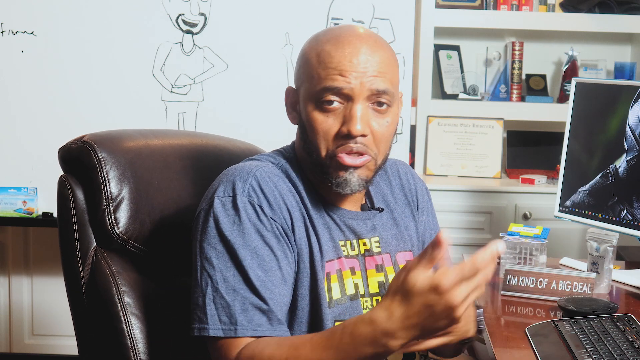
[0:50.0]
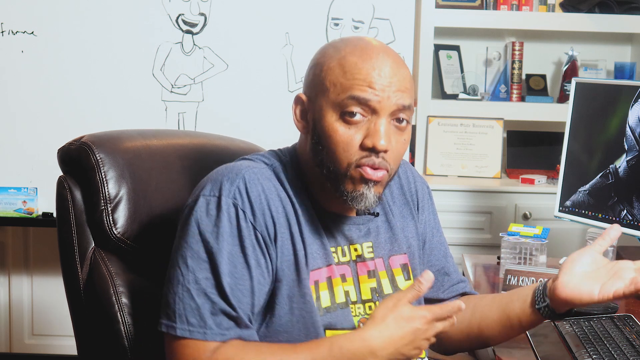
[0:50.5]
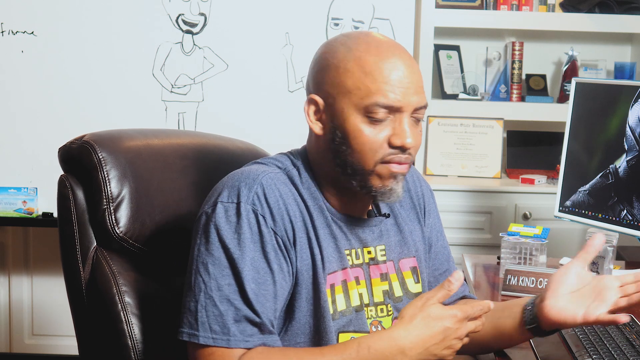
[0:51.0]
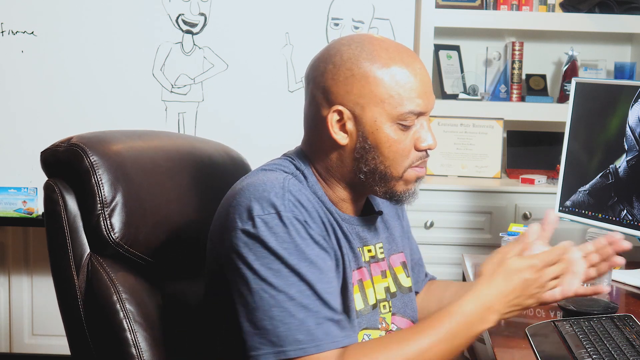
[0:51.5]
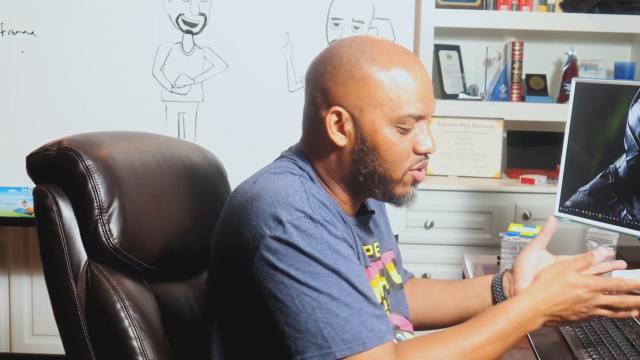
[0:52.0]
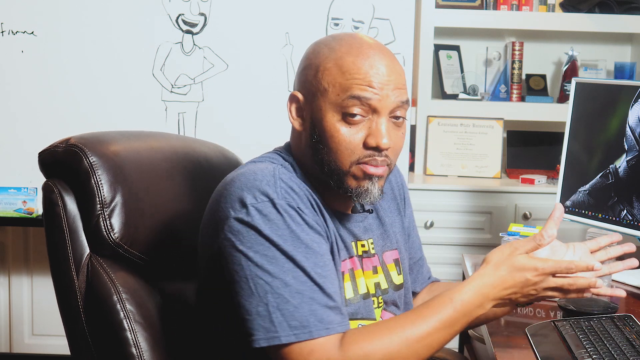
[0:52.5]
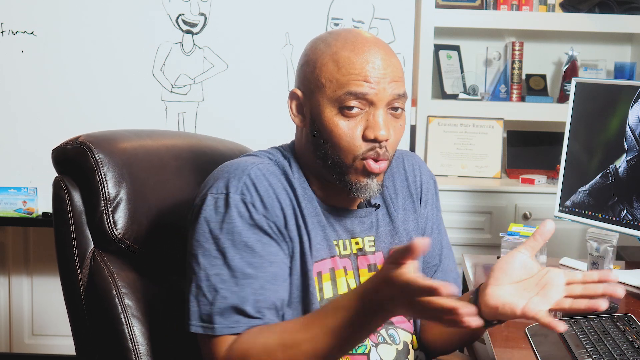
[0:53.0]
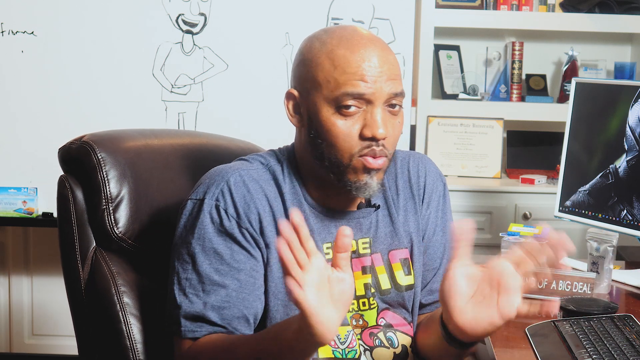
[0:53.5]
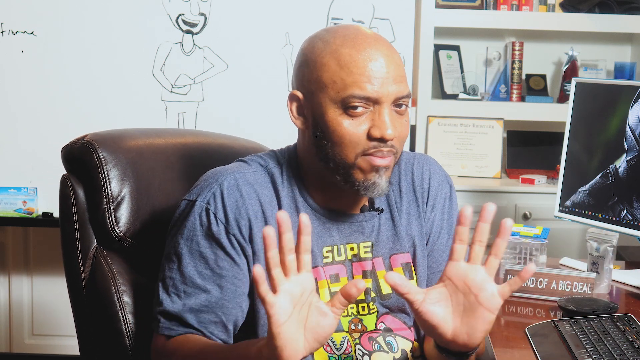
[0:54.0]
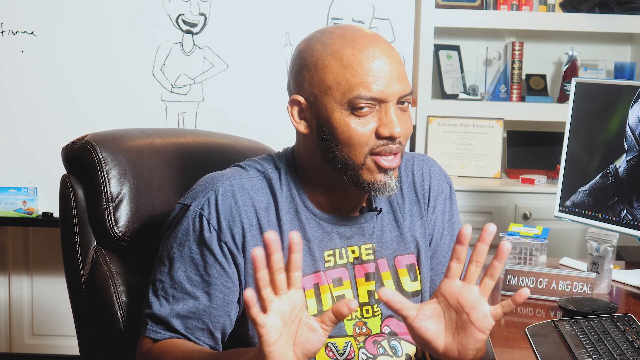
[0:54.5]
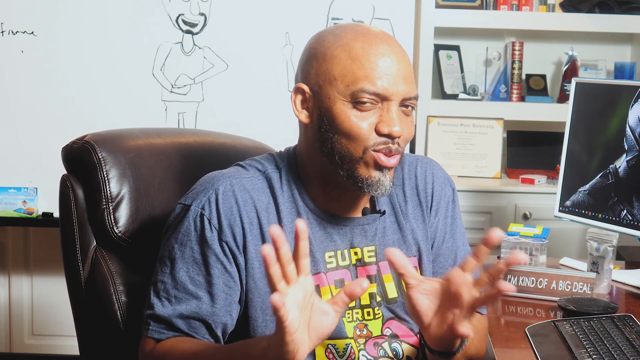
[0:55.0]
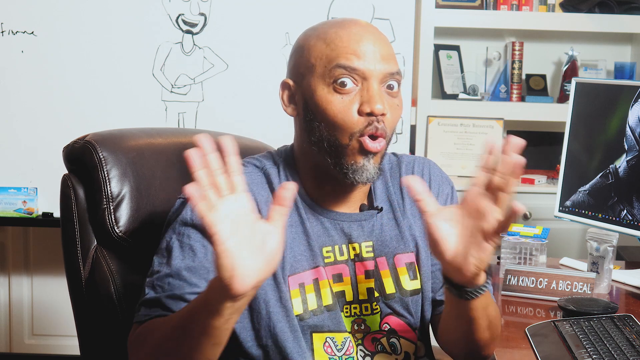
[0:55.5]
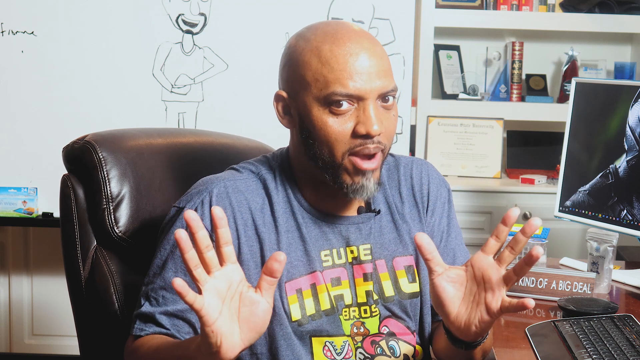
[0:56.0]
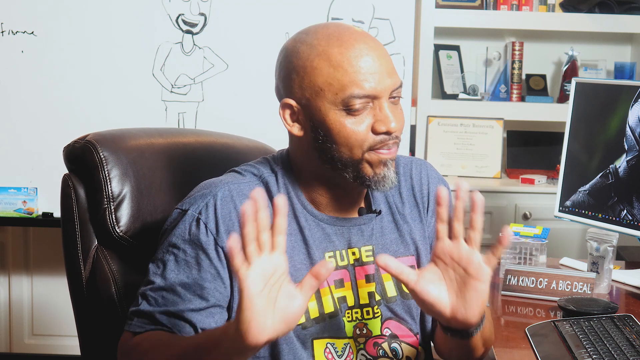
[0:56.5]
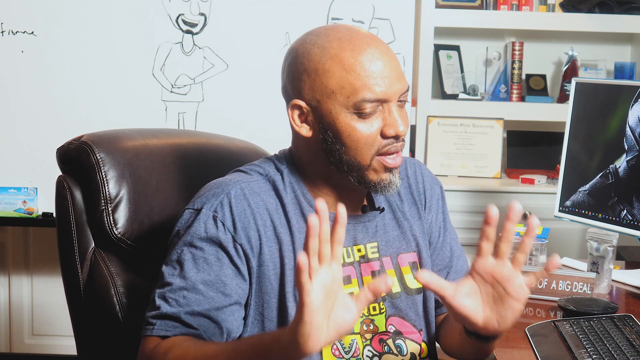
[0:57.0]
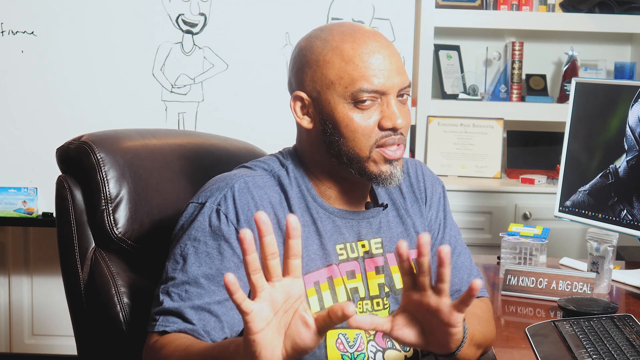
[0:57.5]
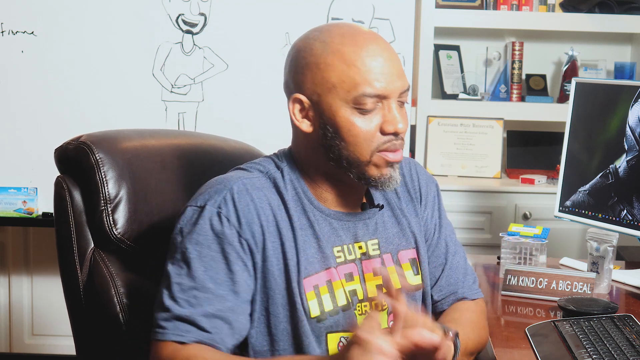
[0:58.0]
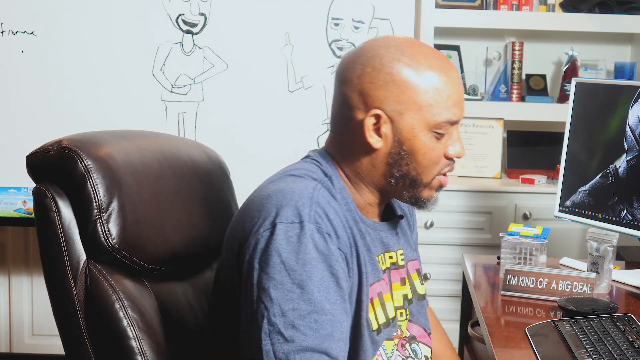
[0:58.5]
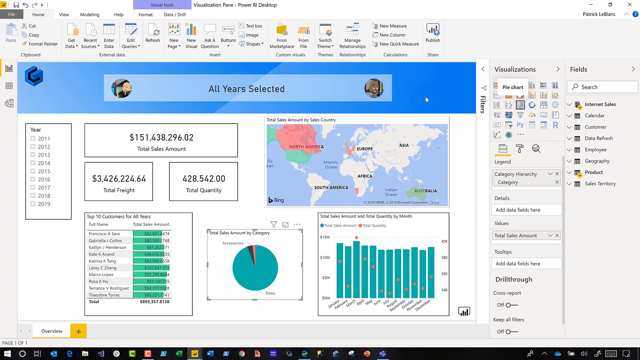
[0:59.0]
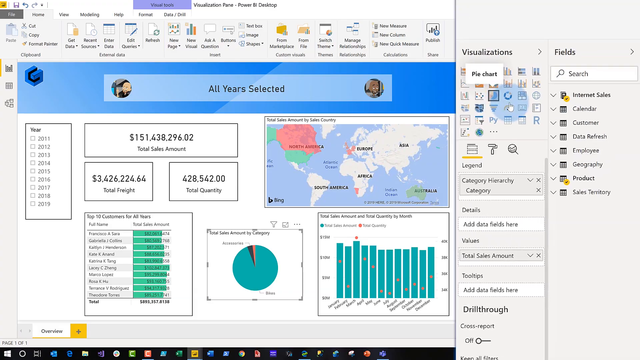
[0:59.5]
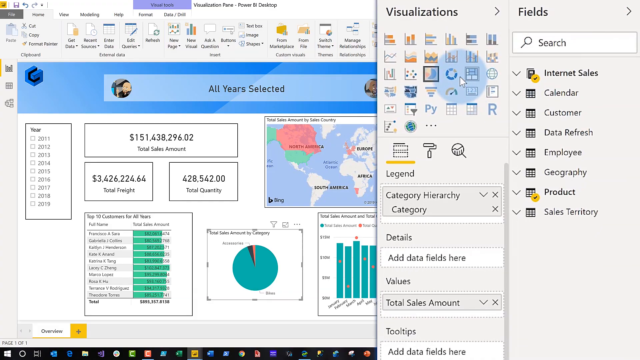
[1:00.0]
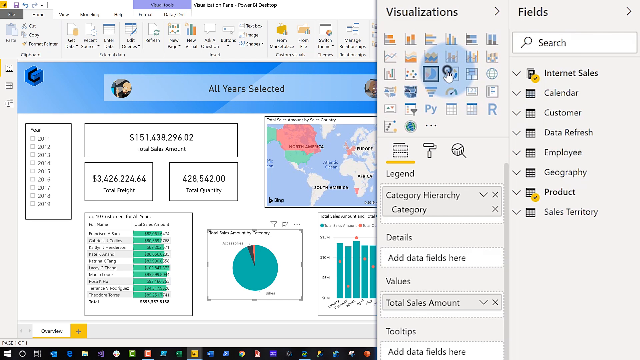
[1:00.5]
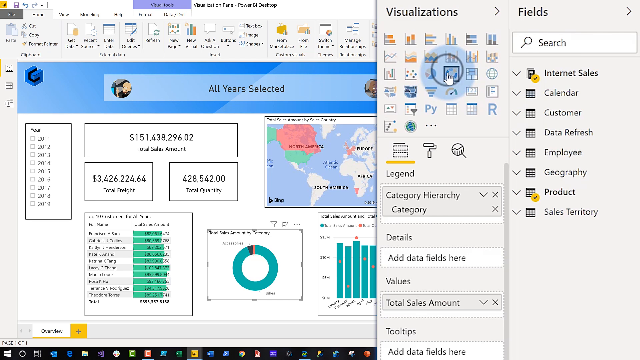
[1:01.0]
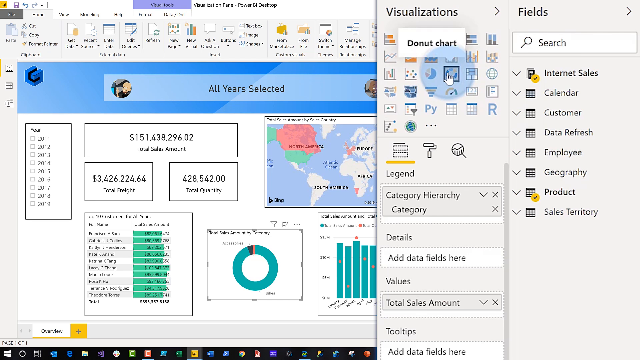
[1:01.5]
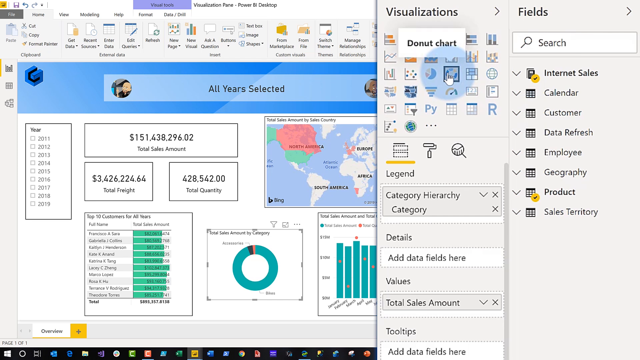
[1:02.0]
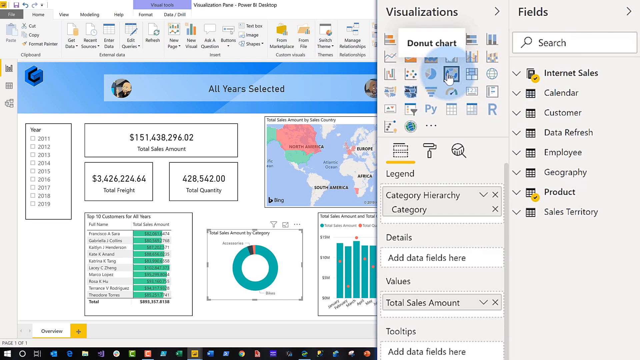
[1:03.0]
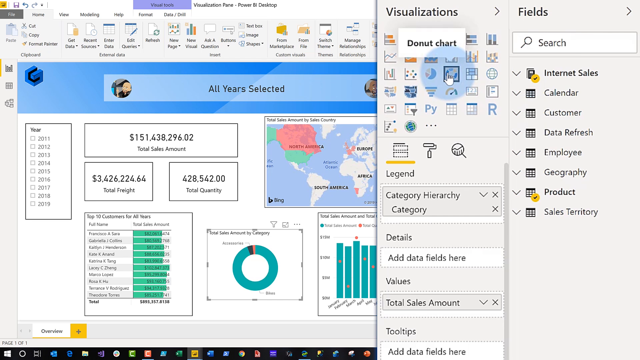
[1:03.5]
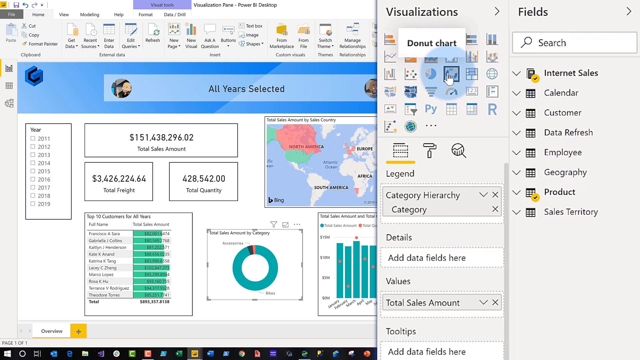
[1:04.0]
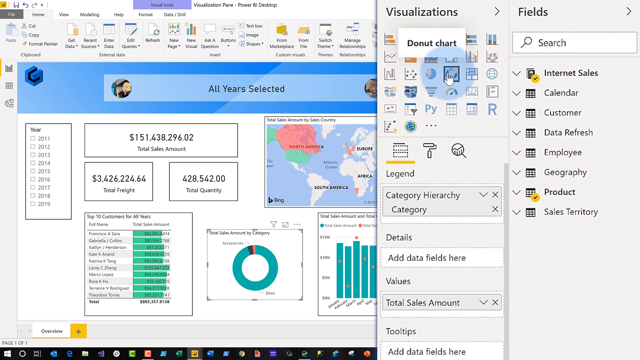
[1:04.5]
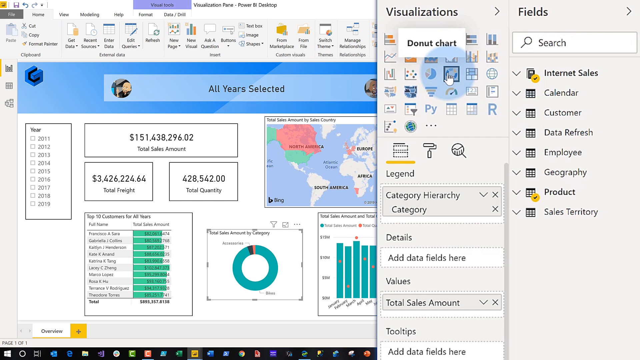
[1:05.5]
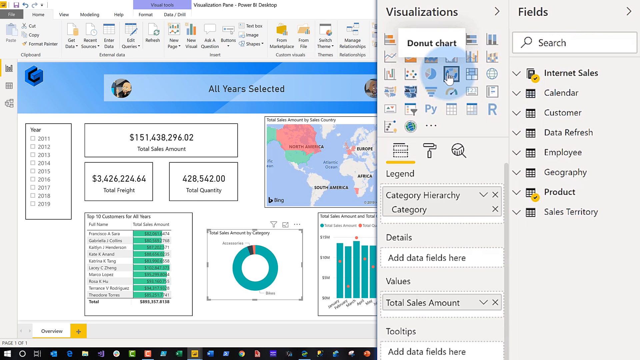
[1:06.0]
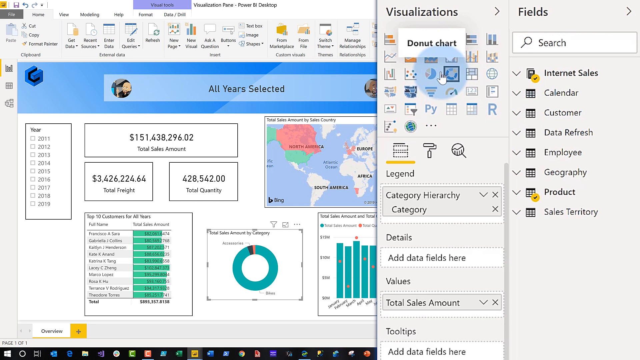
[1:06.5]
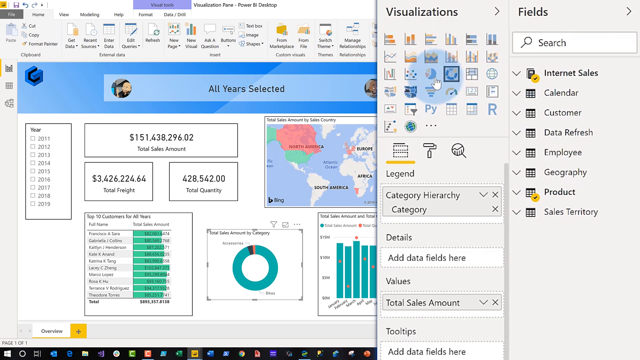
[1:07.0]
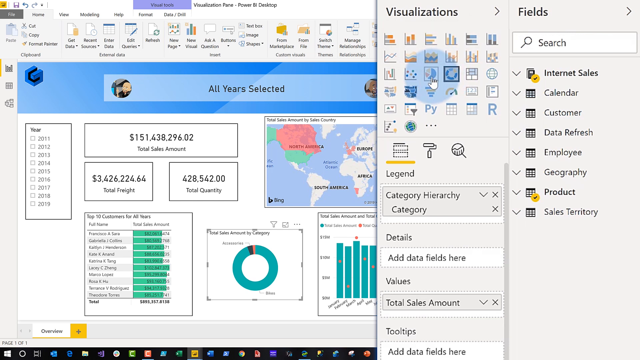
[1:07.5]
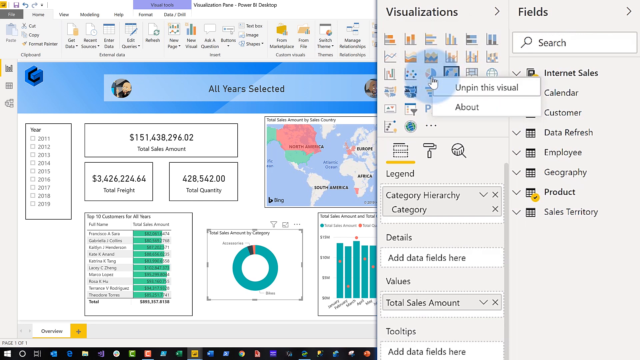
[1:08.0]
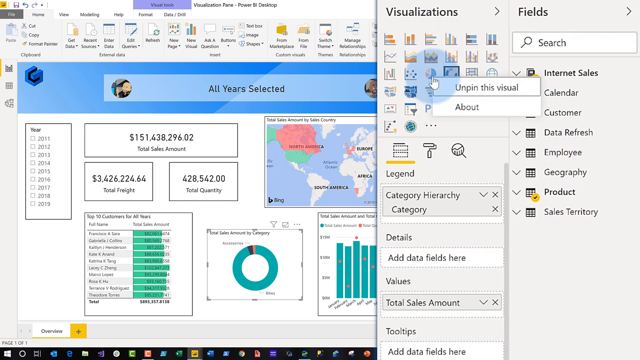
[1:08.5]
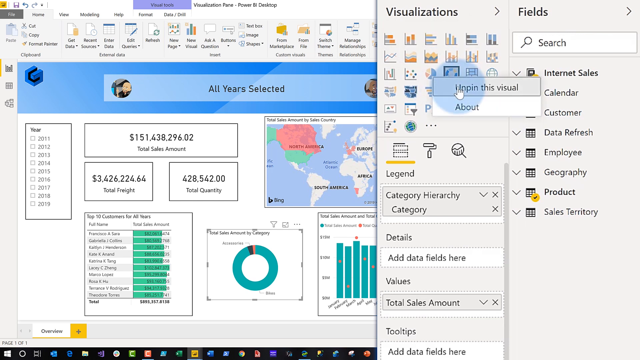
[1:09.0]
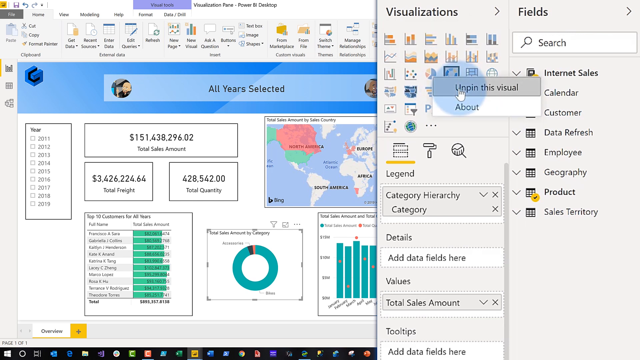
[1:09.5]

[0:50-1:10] The man is on camera, talking and gesturing with his hands. He points both palms at the computer screen and waves them a couple of times while talking; his eyes get big, and his hands move outward and then back in. He turns back to the computer, and the computer screen returns. There are about 30 tools under "visualizations." He appears to click one in the middle called "donut chart," and below it what looks like a donut pie chart appears. On the right-hand side of the white screen is "fields," a search bar, and eight more tools. He goes to the left, right-clicks a tool, and clicks the option "unpin this visual."